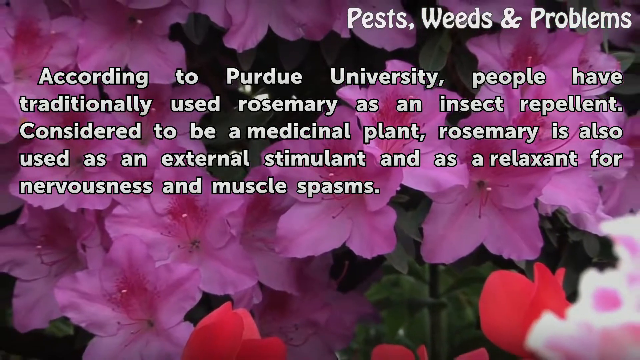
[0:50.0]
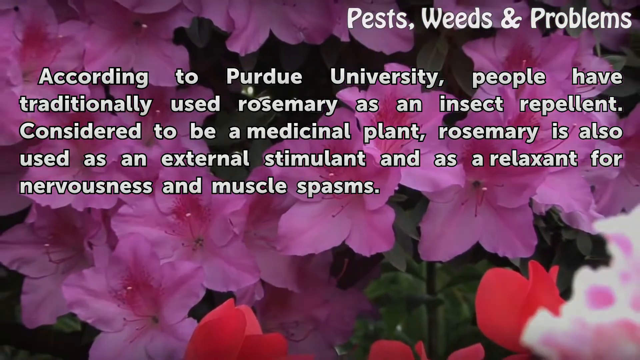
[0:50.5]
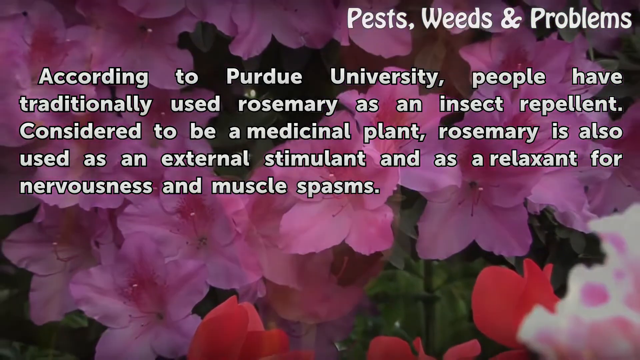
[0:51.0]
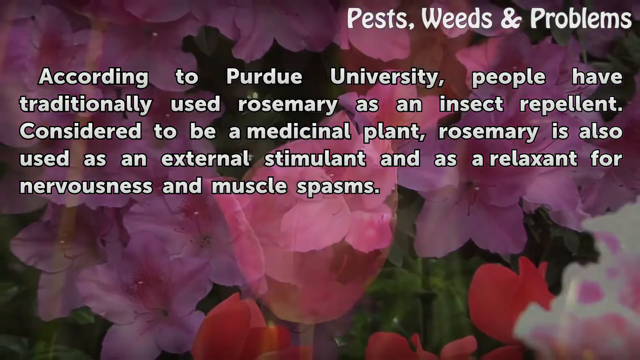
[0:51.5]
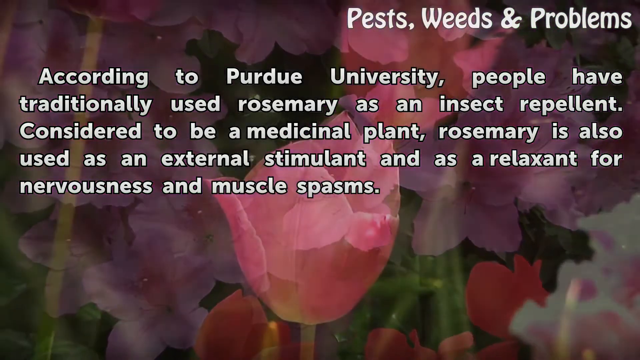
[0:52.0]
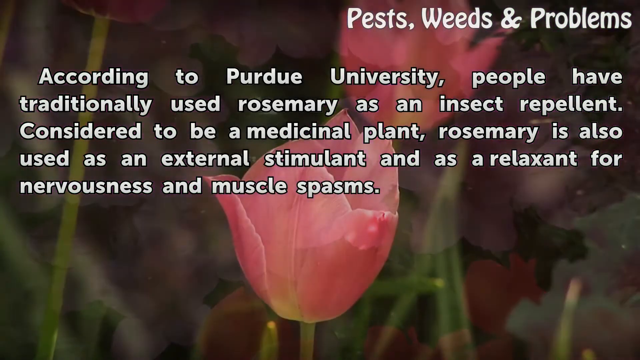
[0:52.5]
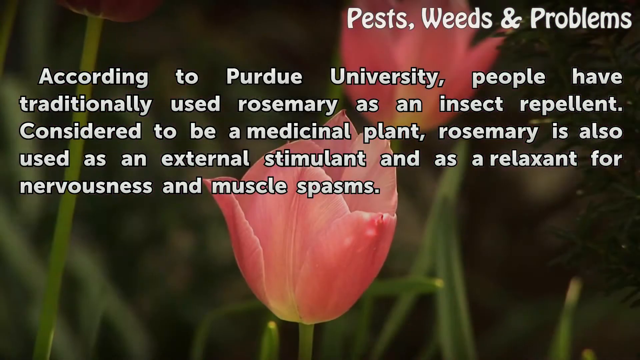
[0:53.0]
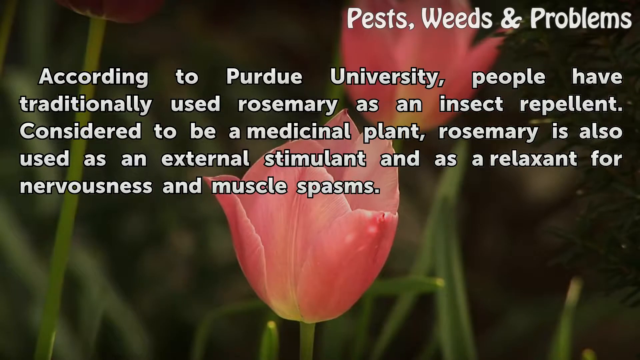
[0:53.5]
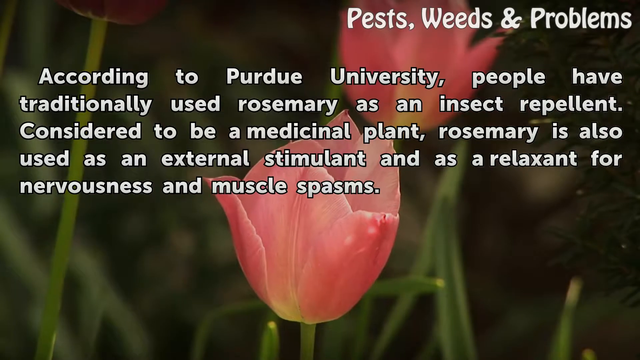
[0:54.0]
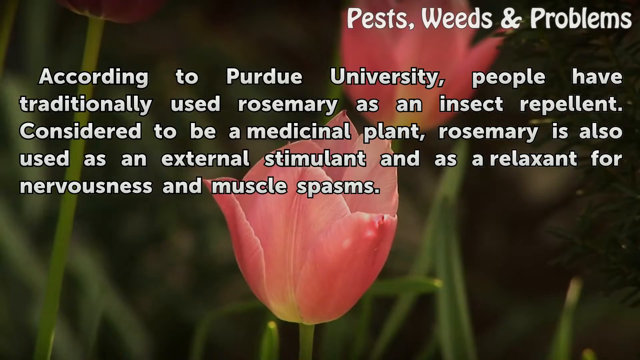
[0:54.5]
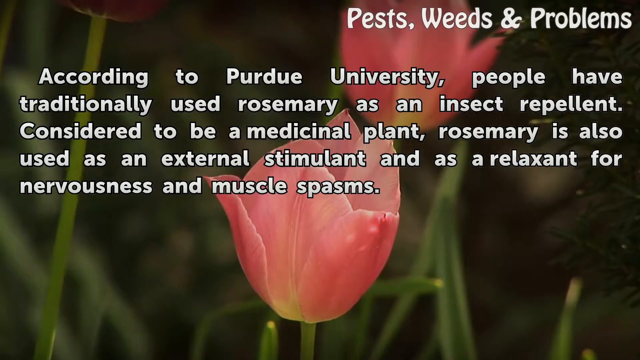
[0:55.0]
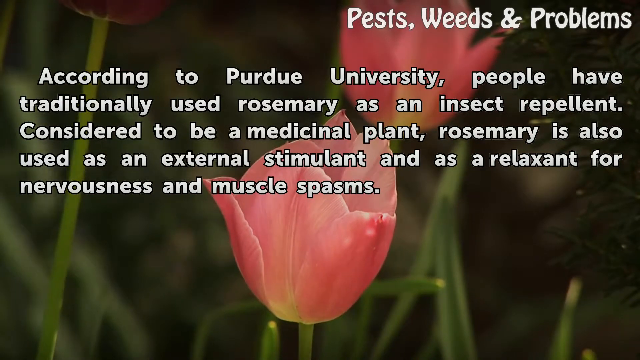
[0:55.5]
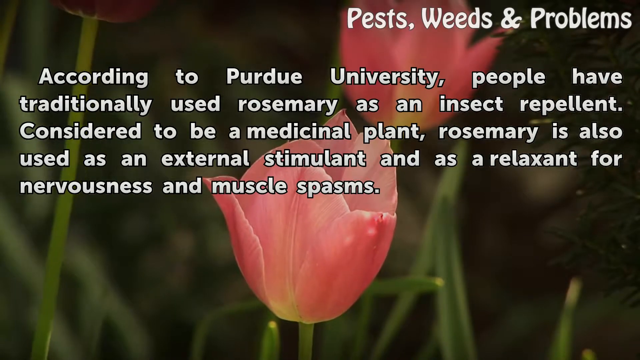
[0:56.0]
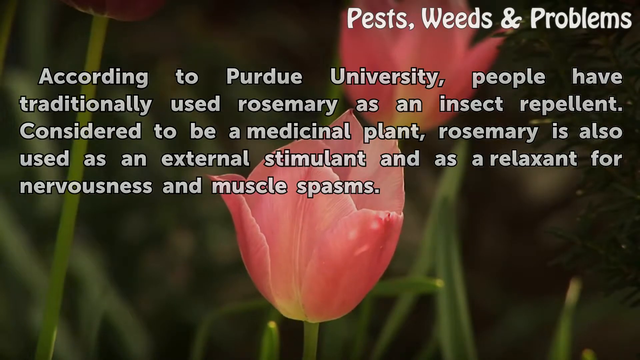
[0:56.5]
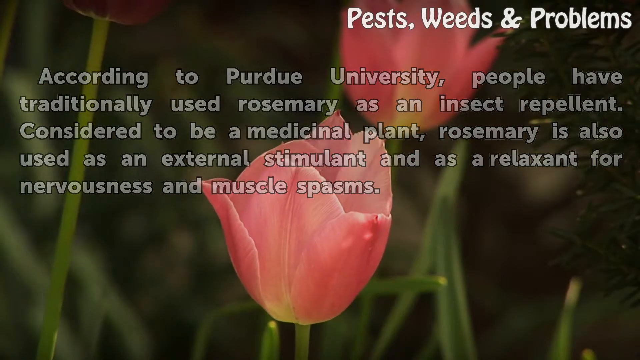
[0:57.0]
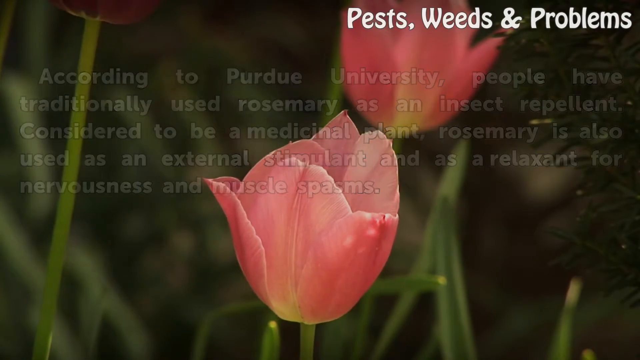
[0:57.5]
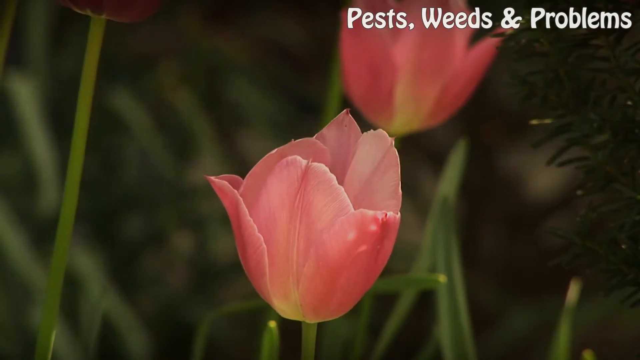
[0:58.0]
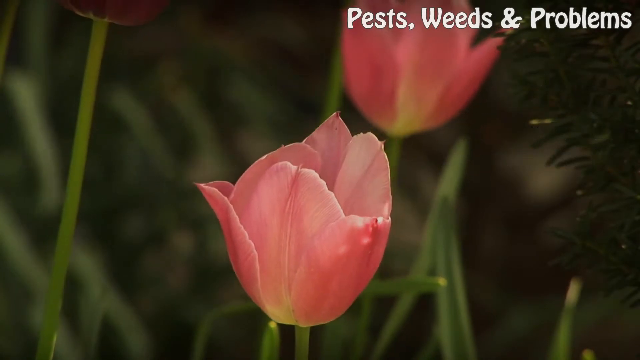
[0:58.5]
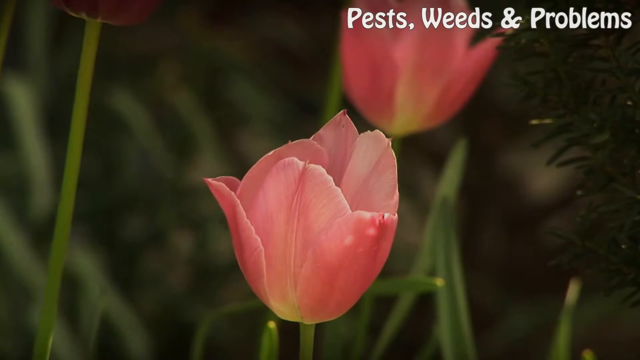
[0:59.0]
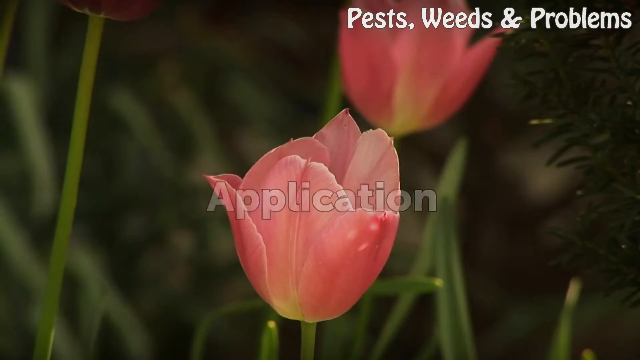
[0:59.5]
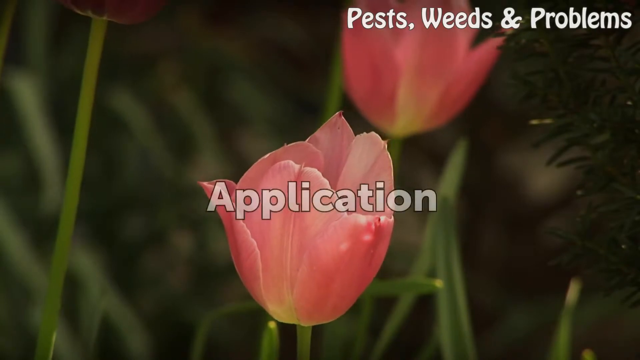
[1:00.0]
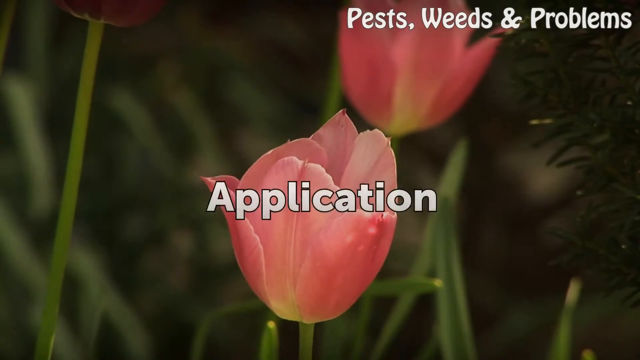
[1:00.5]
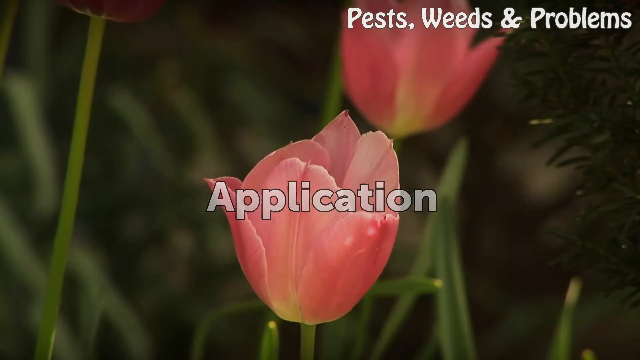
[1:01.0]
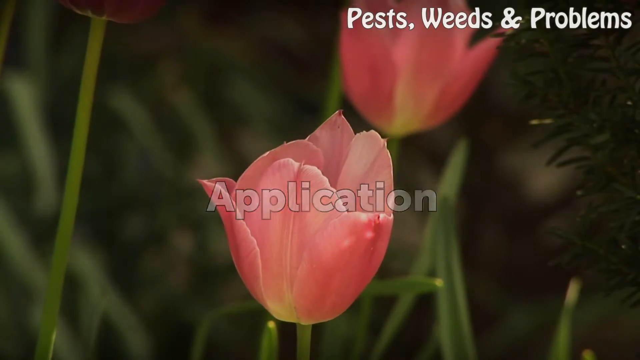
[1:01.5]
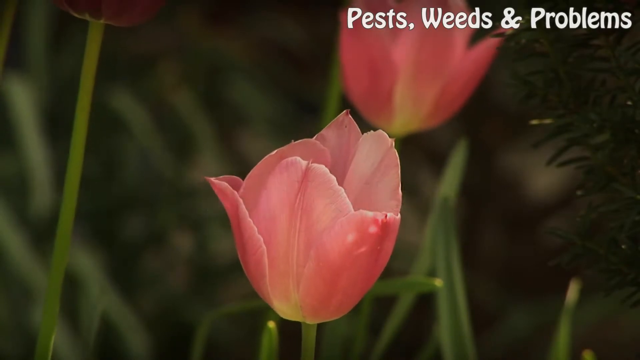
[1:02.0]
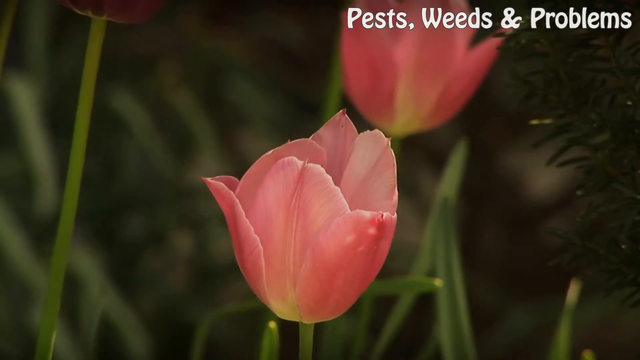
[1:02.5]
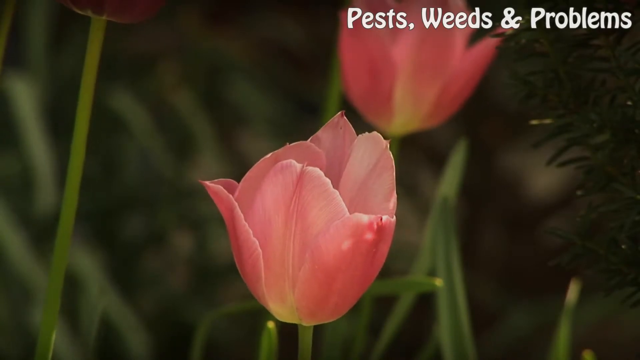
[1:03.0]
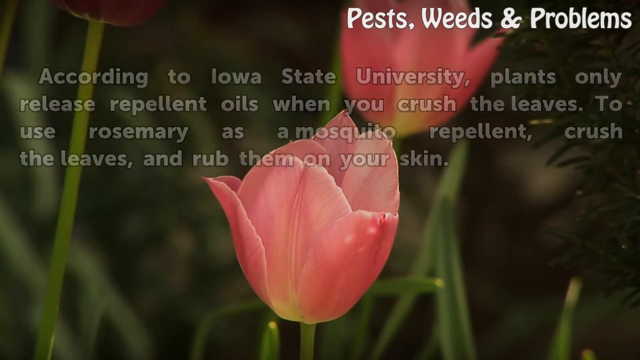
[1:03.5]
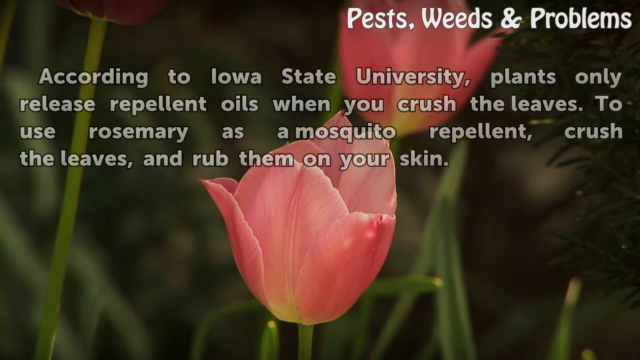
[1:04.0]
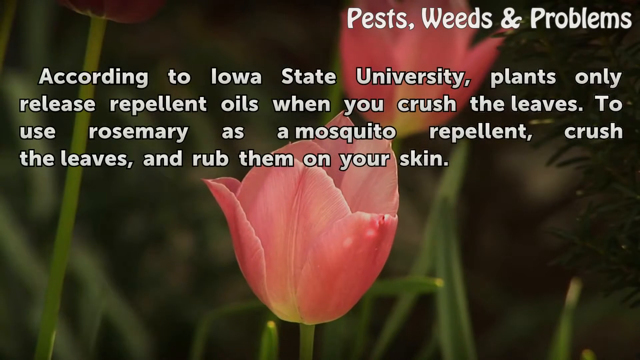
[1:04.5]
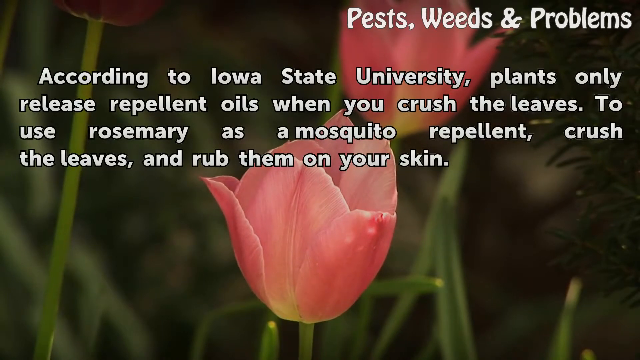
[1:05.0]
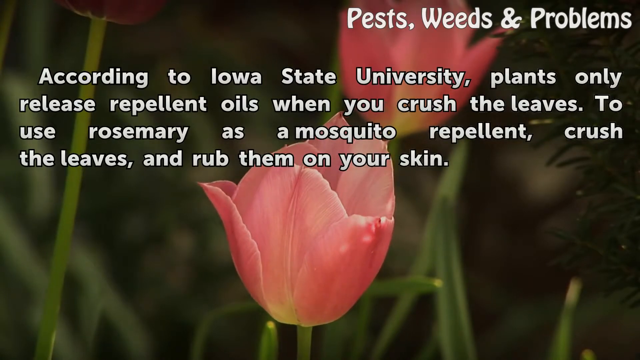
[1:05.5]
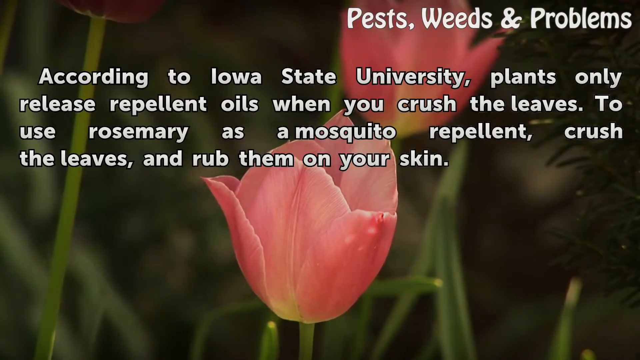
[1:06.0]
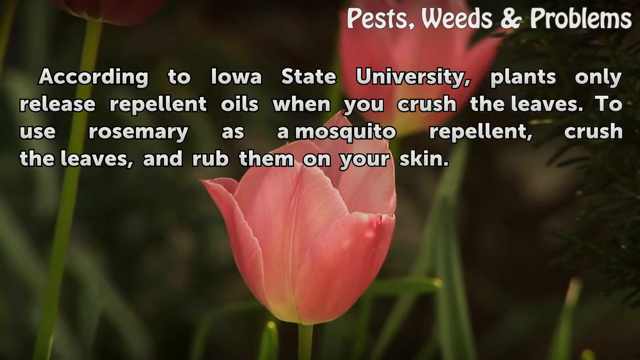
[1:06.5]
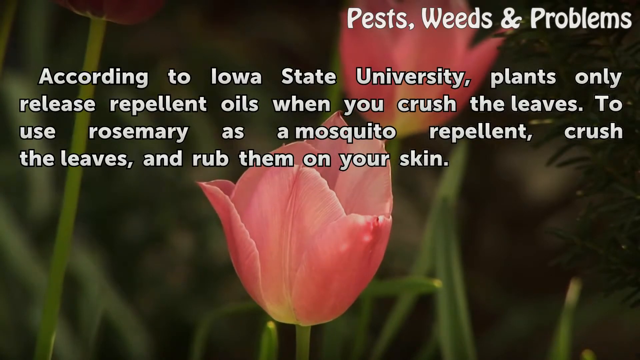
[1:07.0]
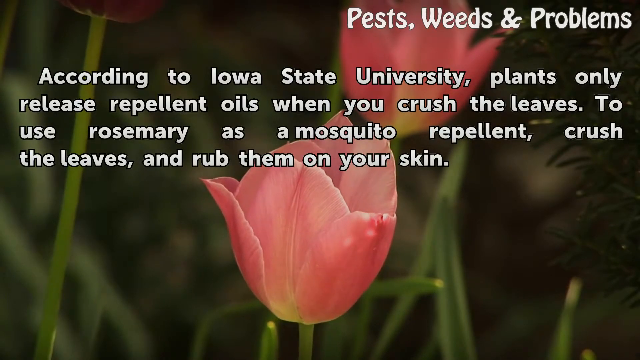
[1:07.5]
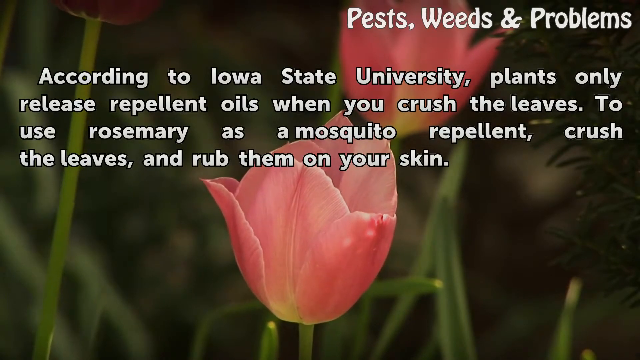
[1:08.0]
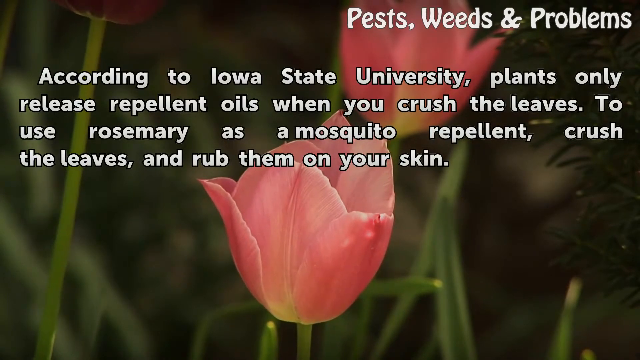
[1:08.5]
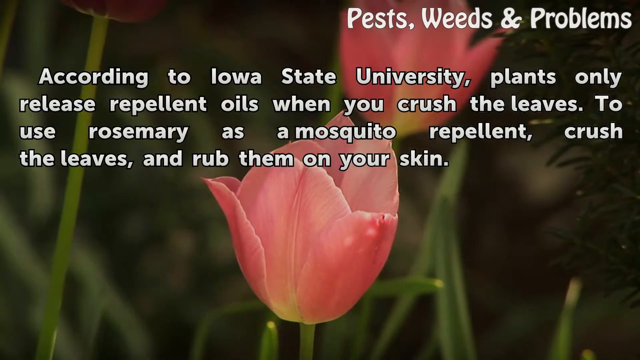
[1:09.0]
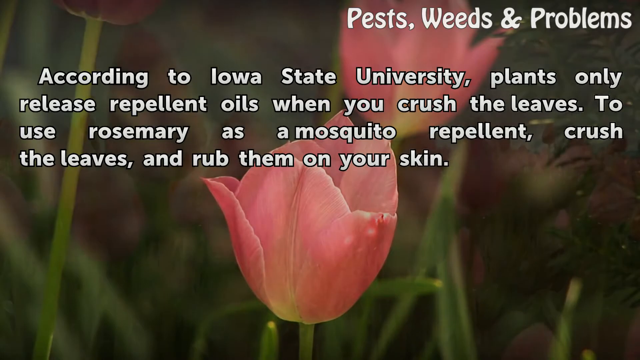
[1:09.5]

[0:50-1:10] The white text is still across the screen as the view slowly zooms out, and the flowers change. There is a pink one at the bottom and in the middle, and up to the right another one that is blurry in the background; the rest is green. The one on the bottom is kind of moving back and forth a little, as the wind blows, also moving some of the blurry leaves in the background. The text in the center goes off the screen, and then "application" appears across the center in white with a black border and goes off the screen. White text then reads: "according to Iowa State University, plants only release repellent oils when you crush the leaves. To use rosemary as a mosquito repellent, crush the leaves and rub them on your skin." The tulip is still moving up and down, kind of side to side. Up the right side there are pine needles, and then it is just brown. A couple of long green stems go up, especially on the left side, and a little bottom edge of a flower is visible just to the right of the top left corner.